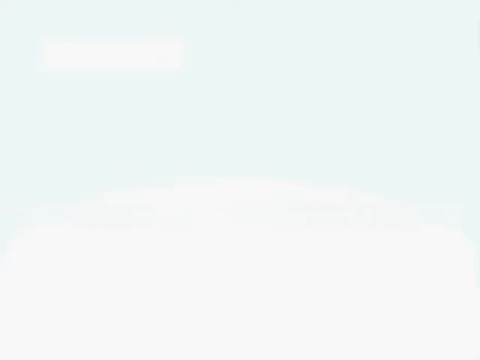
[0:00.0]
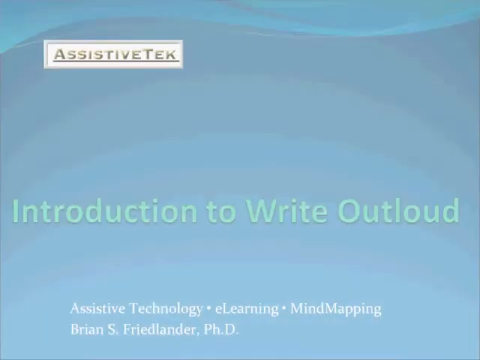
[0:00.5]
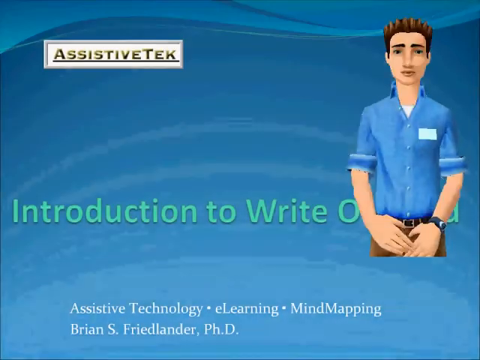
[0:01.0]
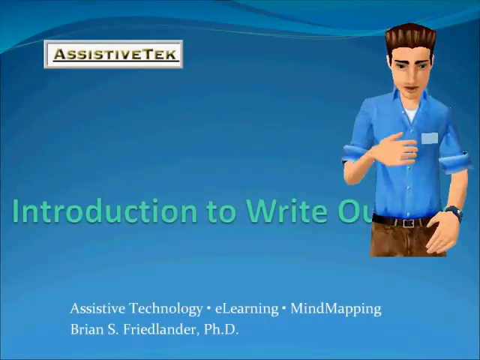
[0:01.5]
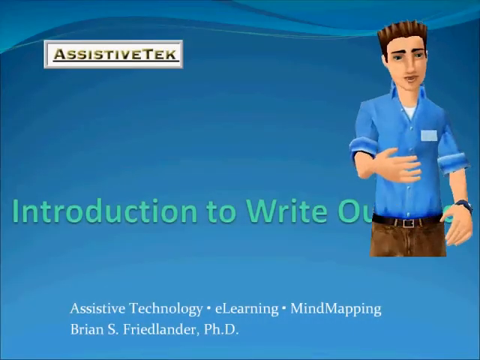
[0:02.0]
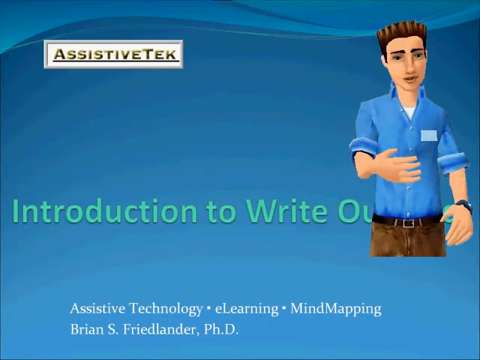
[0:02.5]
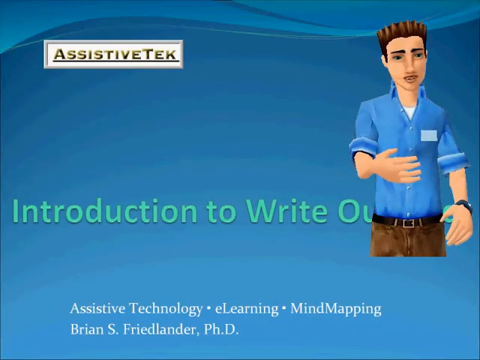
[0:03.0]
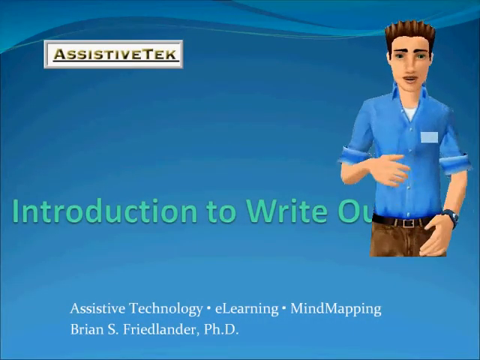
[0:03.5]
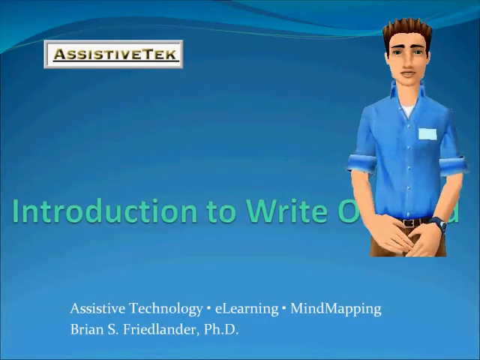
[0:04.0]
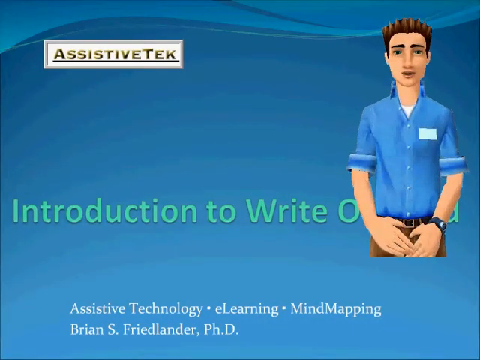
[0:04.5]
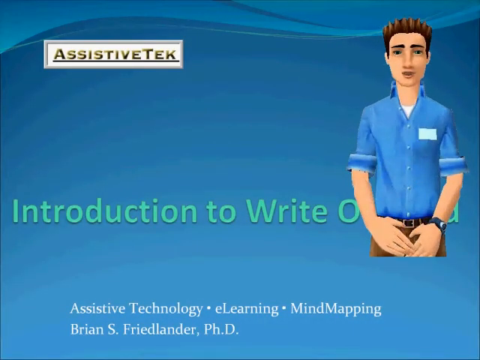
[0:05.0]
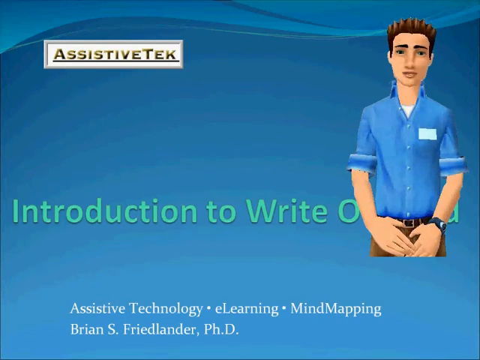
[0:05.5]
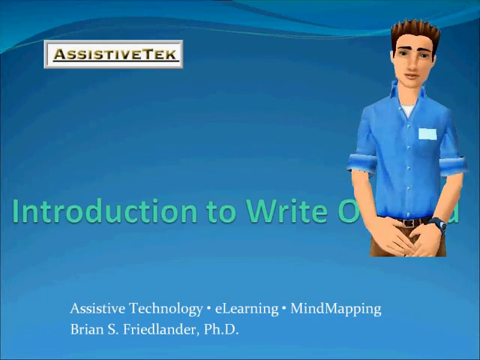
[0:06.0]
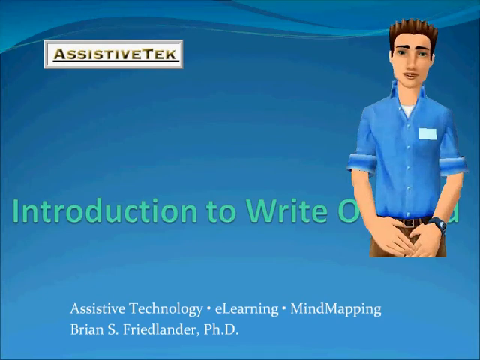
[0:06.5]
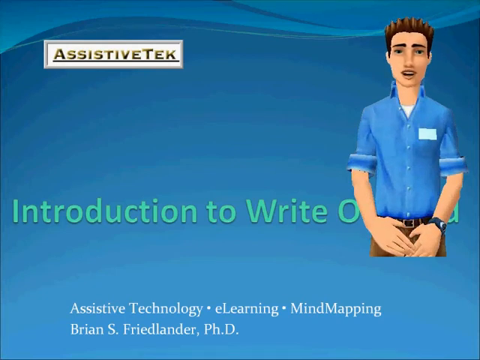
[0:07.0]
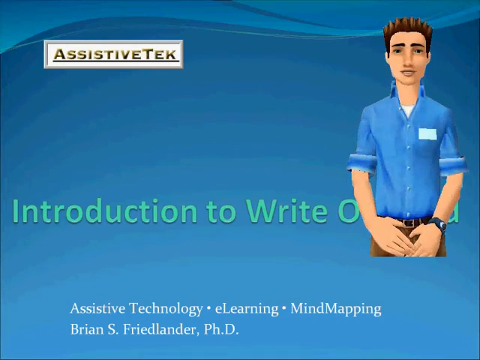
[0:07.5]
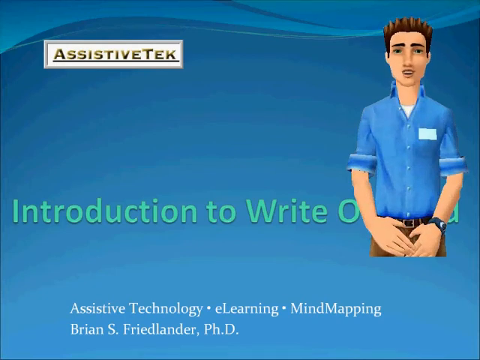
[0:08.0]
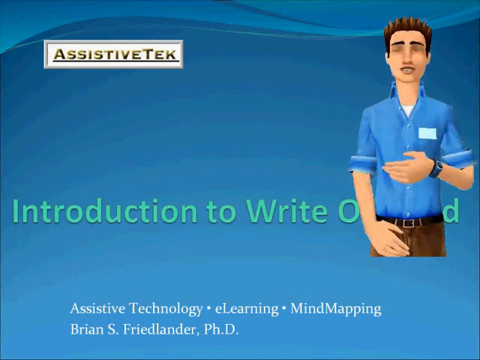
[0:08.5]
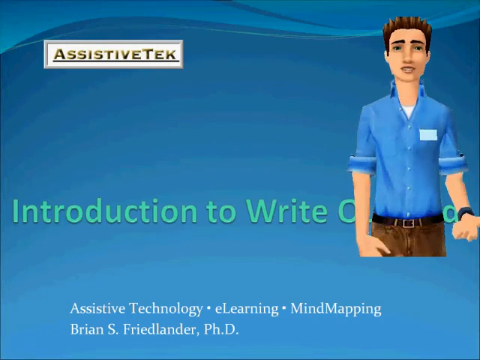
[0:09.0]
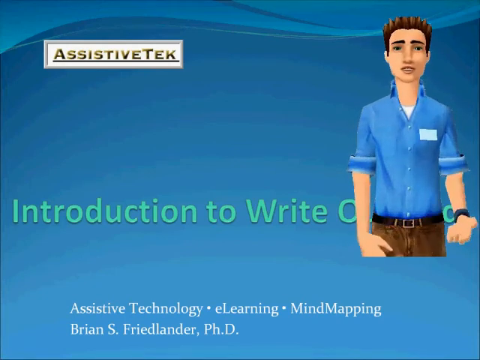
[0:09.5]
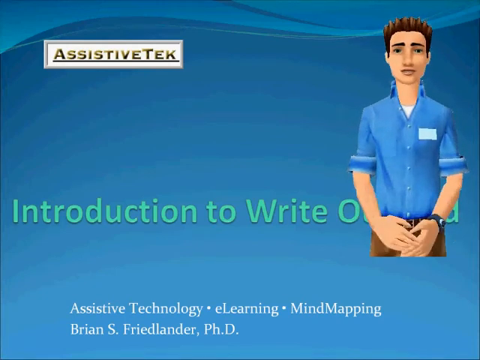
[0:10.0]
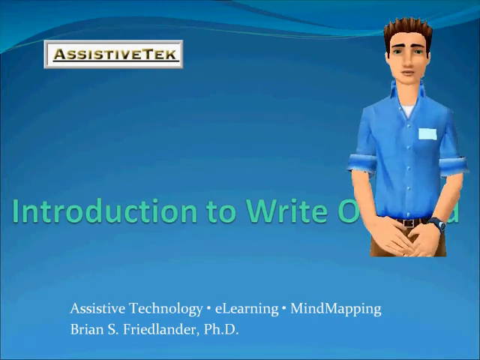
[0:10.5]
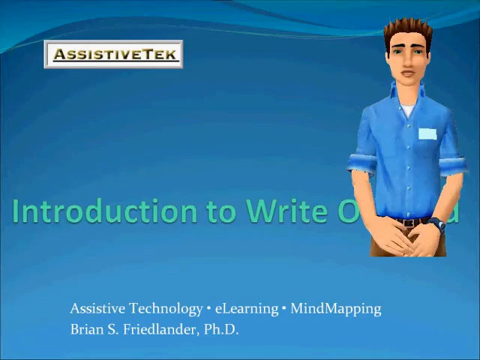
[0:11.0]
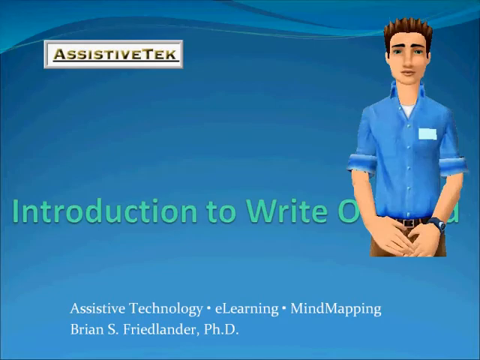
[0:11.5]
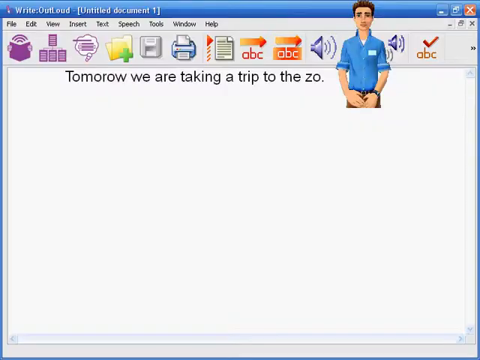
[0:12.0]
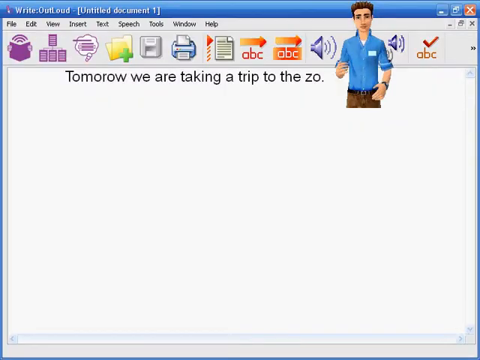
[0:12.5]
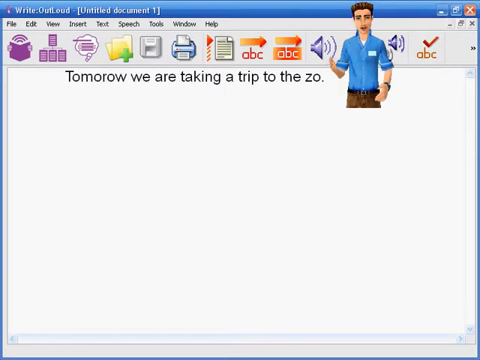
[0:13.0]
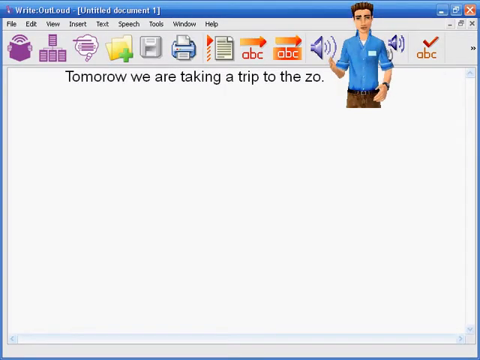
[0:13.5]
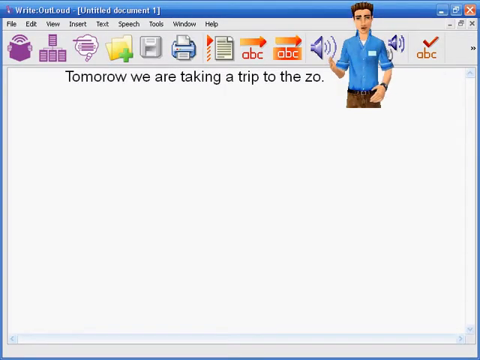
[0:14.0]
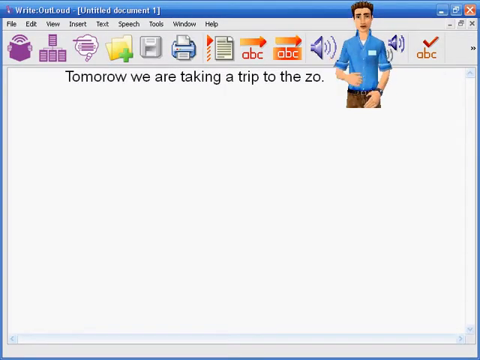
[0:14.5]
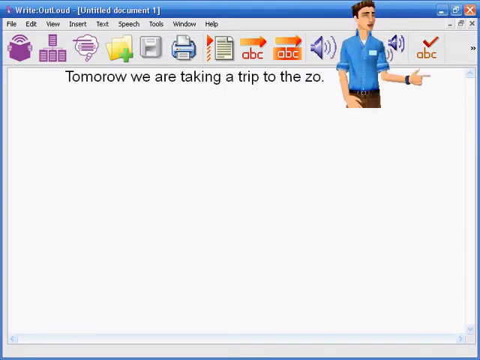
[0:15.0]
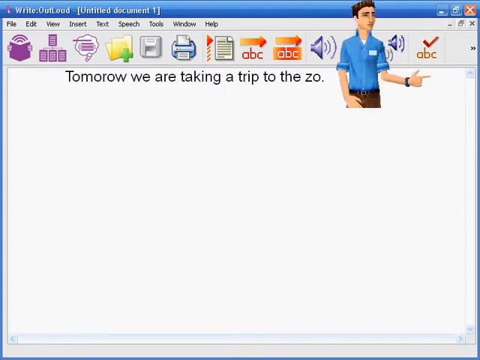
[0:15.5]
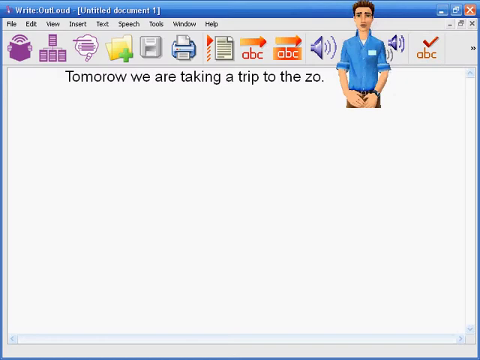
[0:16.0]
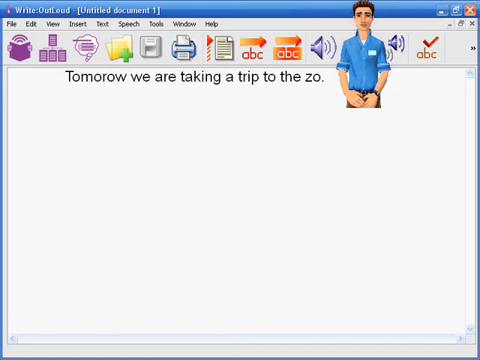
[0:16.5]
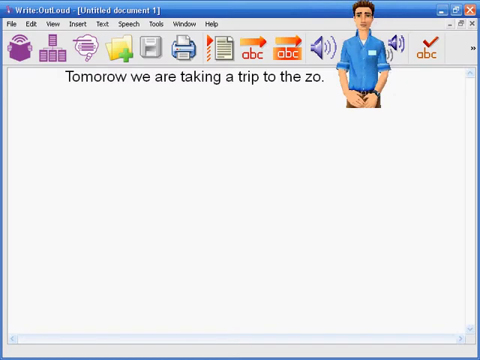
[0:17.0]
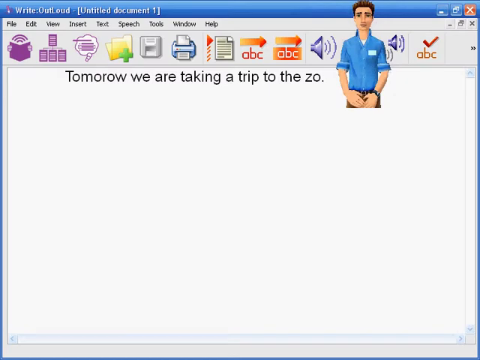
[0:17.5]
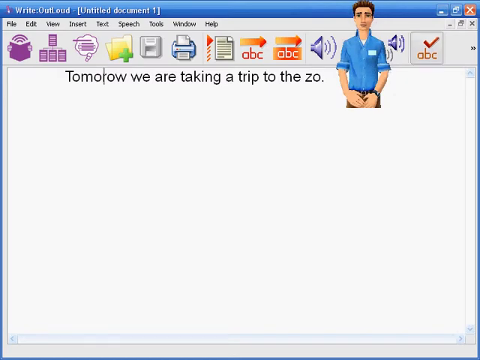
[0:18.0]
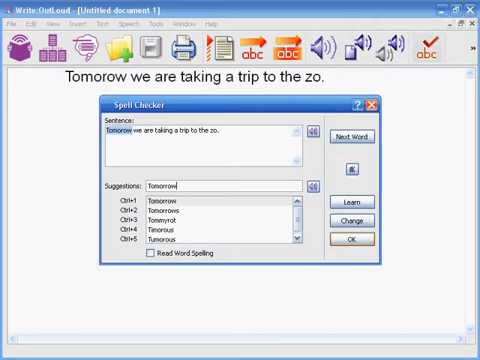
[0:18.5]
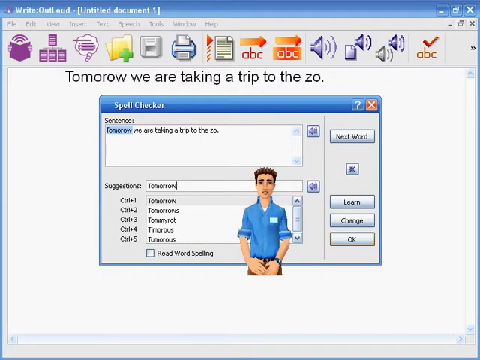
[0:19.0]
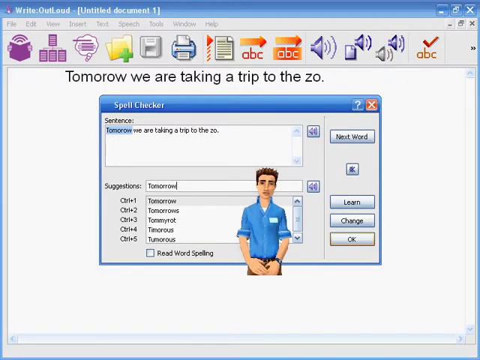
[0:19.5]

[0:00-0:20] A white screen fades into blue, revealing what looks like the start of a slide. At the top is a blue or white rectangular box containing the words "assistive tech" in a sort of beige color that darkens to a dark brown at the bottom. On the right is a male avatar wearing a sort of generic blue button-up shirt, a black belt, and khaki pants. His hands cover his crotch area, he wears a black watch, and a small name tag is over his left breast pocket area, which appears on the right side from the viewer's perspective. The title in the middle reads "introduction to write" followed by the letter "O"; the rest of the words are cut off because the man is blocking them. Below that, the text reads "assistive technology, e-learning, mind mapping, Brian S. Freidlander, PhD". The figure then starts animating, sort of talking to the viewer and using his hand, or his knuckles, to point outward. He makes a gesture with his left hand, sort of swinging it out to his side. The view switches to a different tab called "write outline", which looks like a writing program similar to Word but simpler. Below the usual file, edit and view menus is a row of buttons: a purple one that looks like a book with a signal coming out, one like three books connected to a book above it, a speech bubble, a folder with a plus symbol, a save button, a print button, and font and volume buttons. The text already written reads "tomorrow we are taking a trip to the zoo", but "zoo" is spelled "zo", missing the second O. The figure keeps talking, then sort of turns and points to the right before the view zooms into a new tab.